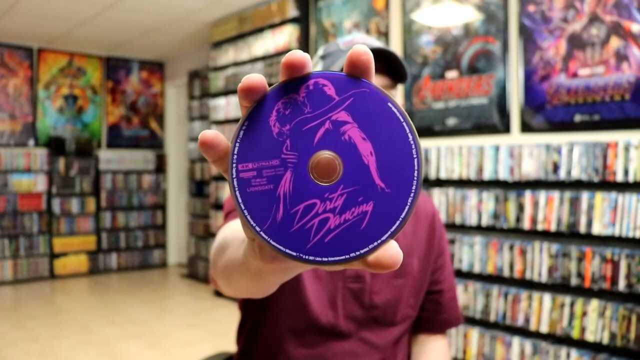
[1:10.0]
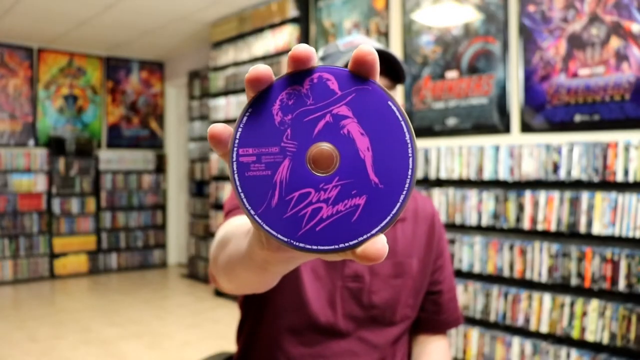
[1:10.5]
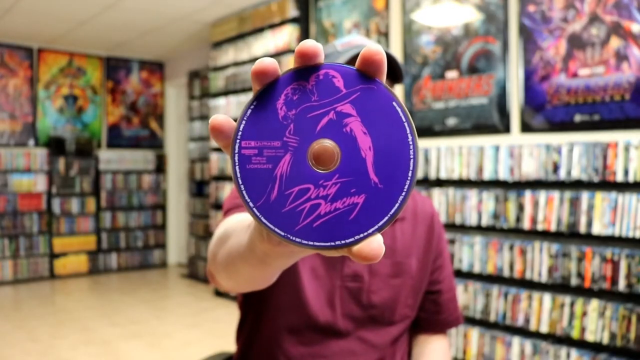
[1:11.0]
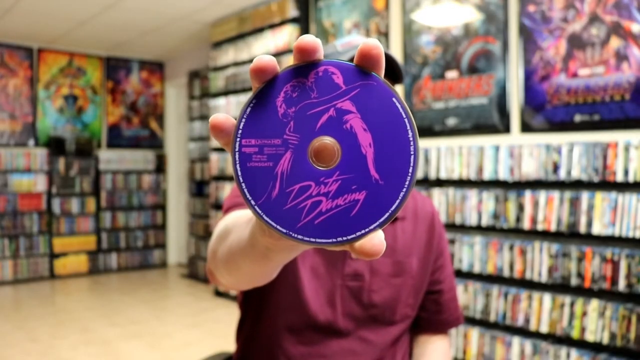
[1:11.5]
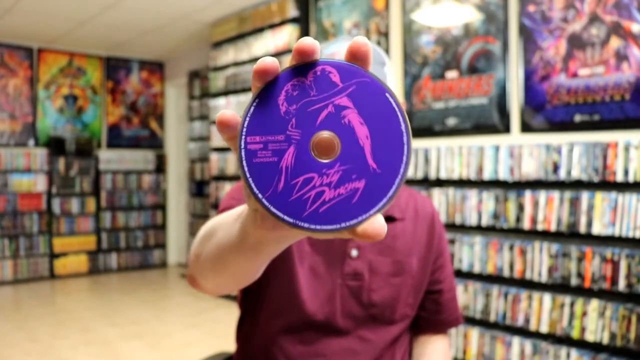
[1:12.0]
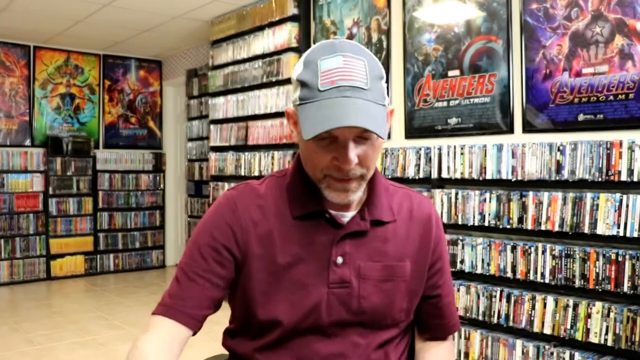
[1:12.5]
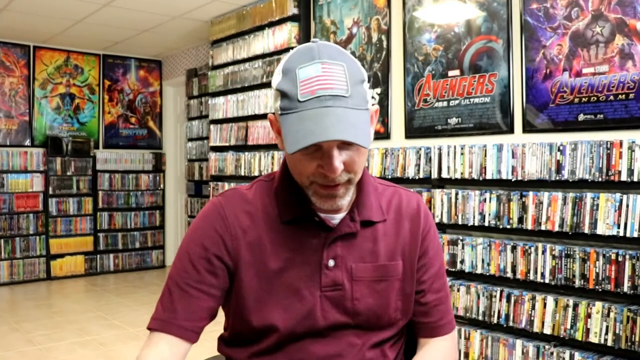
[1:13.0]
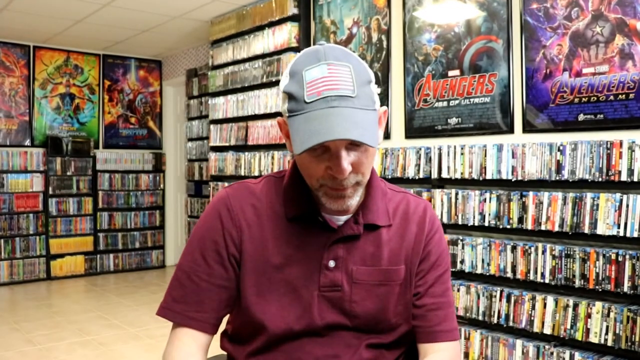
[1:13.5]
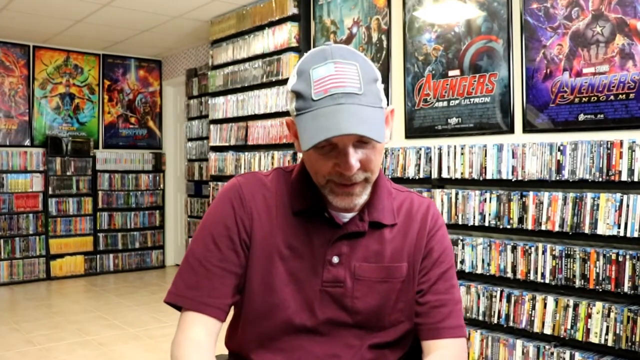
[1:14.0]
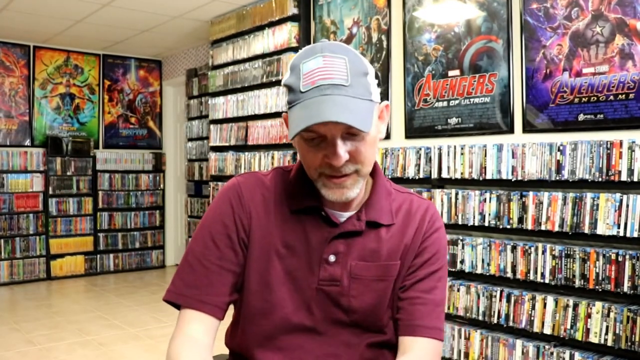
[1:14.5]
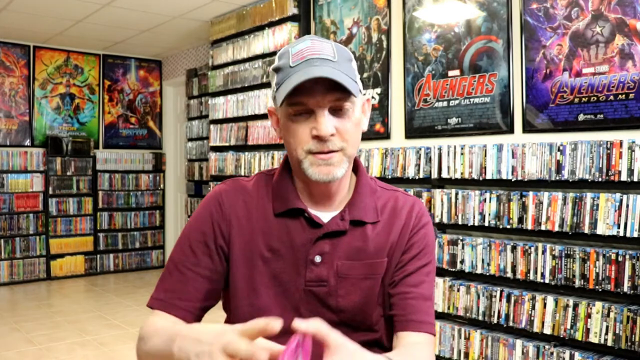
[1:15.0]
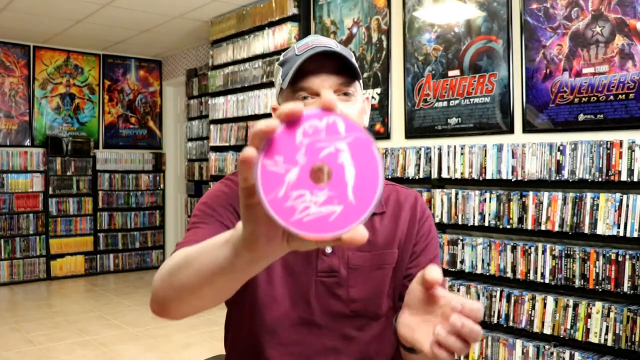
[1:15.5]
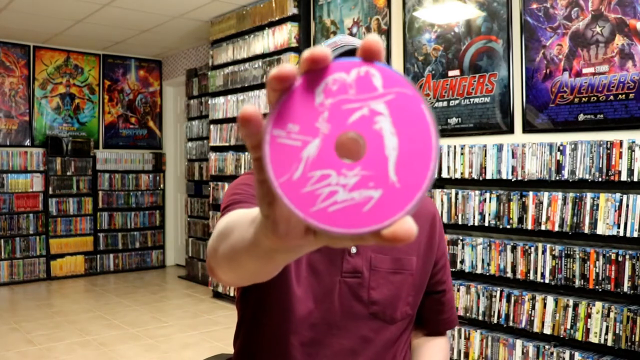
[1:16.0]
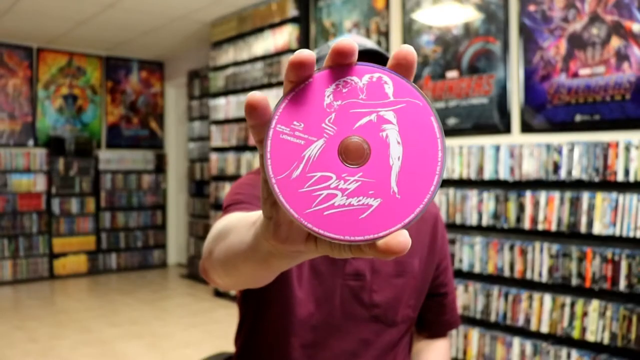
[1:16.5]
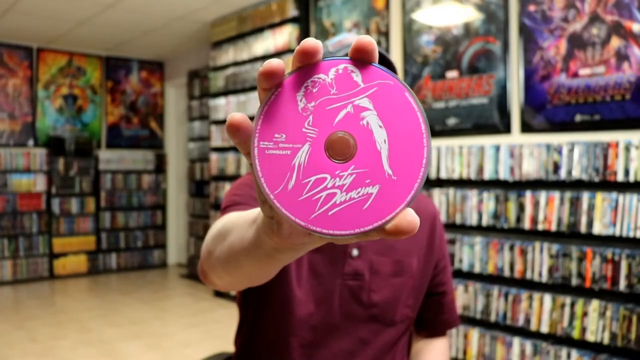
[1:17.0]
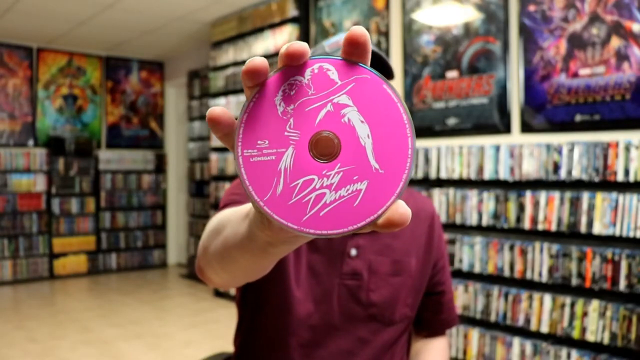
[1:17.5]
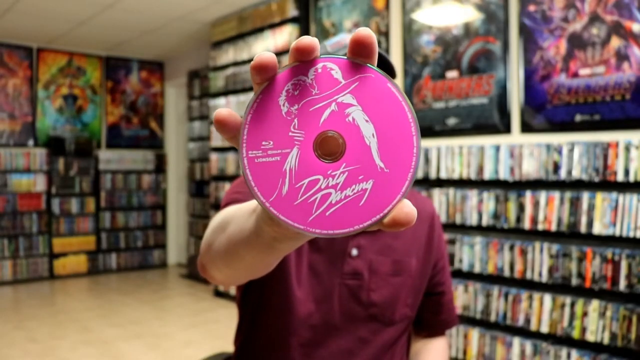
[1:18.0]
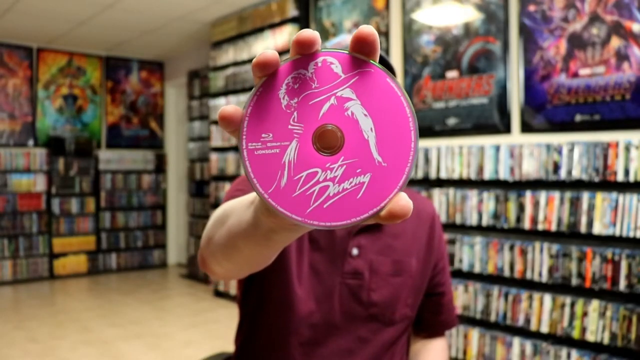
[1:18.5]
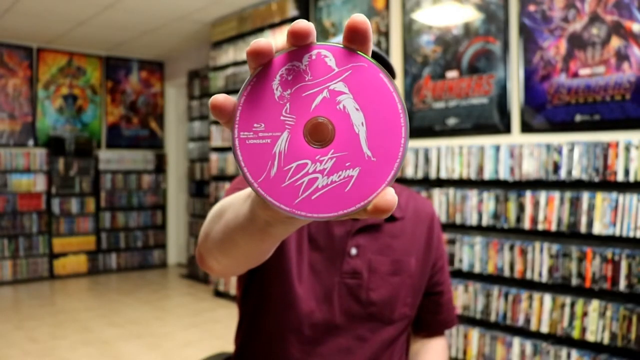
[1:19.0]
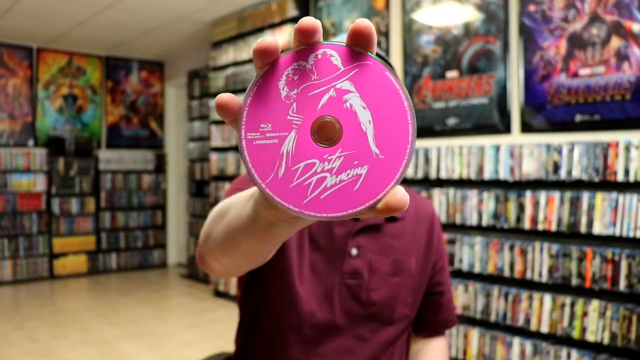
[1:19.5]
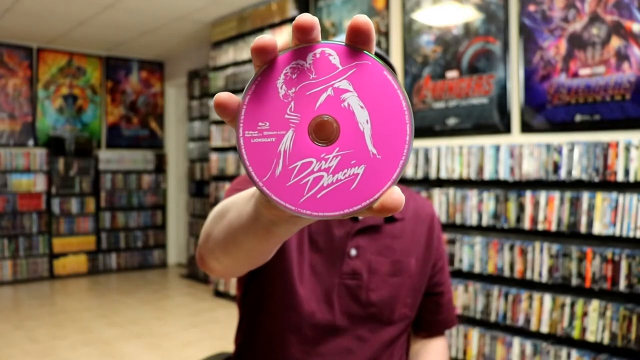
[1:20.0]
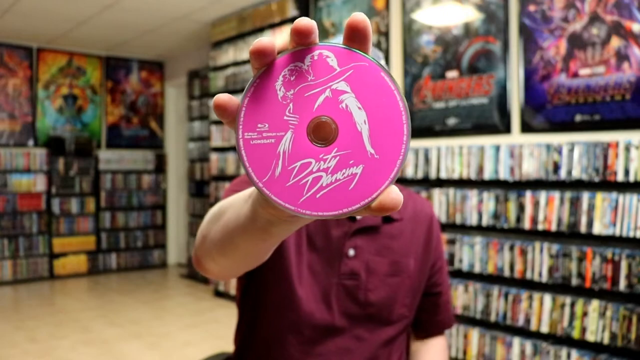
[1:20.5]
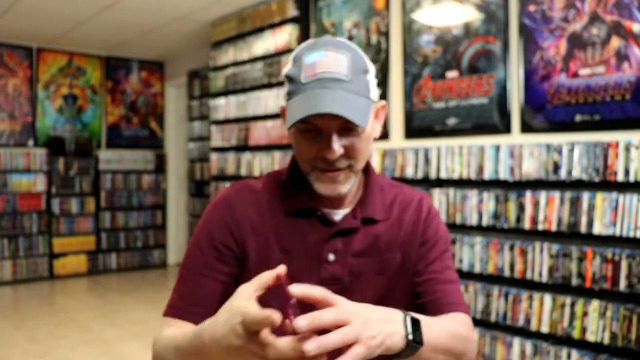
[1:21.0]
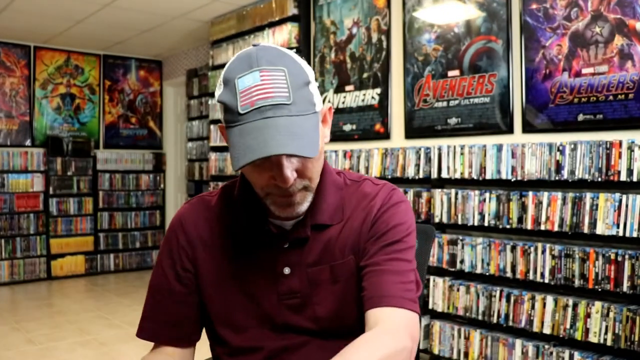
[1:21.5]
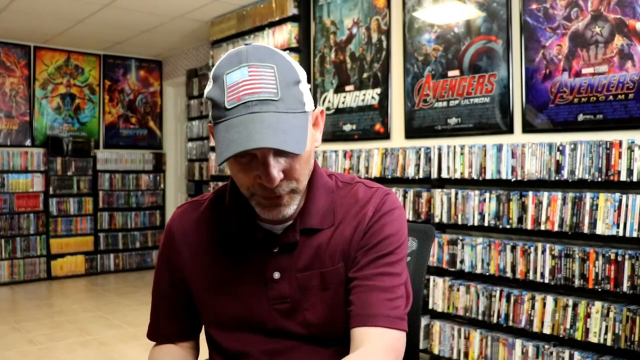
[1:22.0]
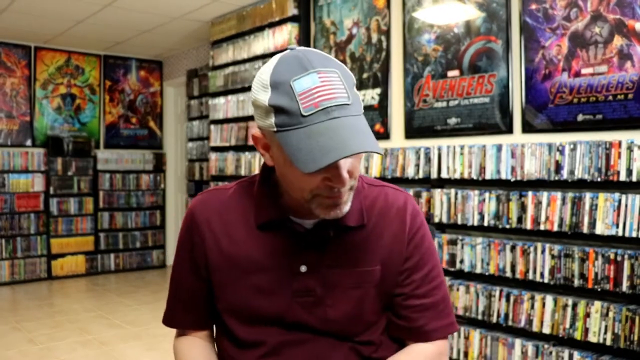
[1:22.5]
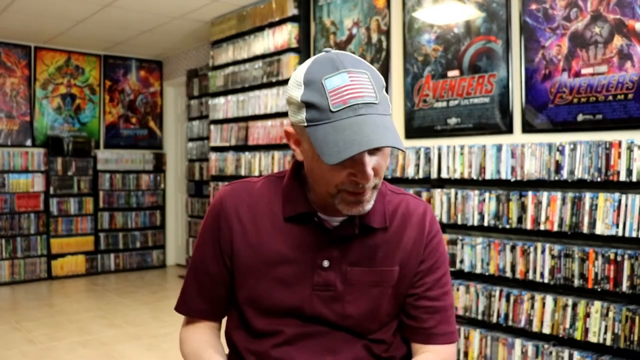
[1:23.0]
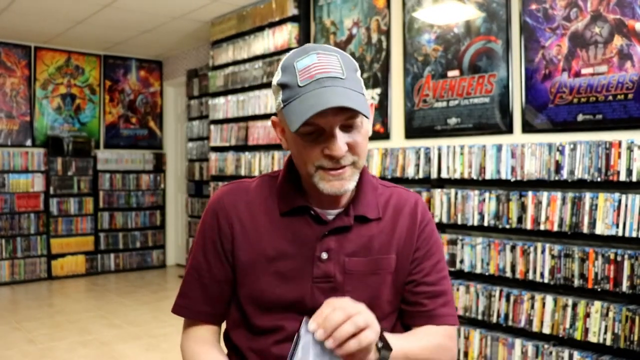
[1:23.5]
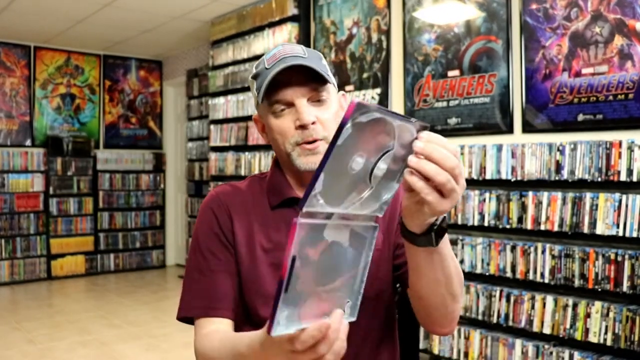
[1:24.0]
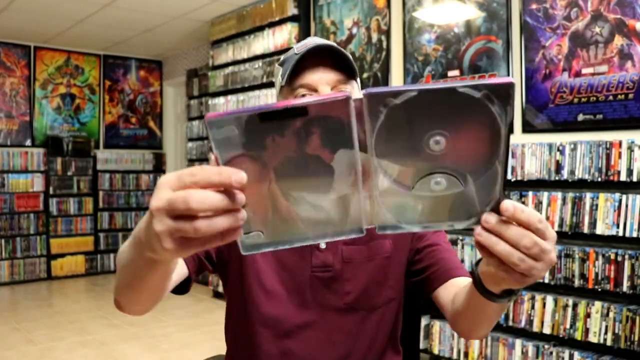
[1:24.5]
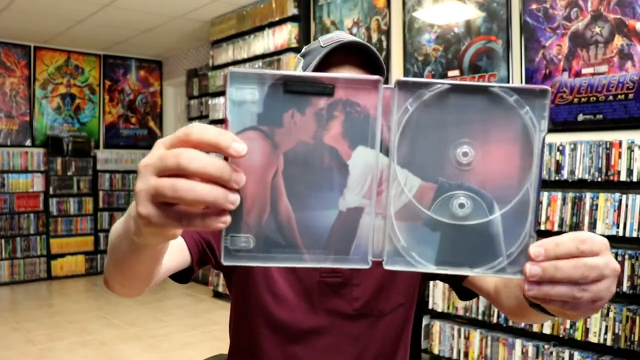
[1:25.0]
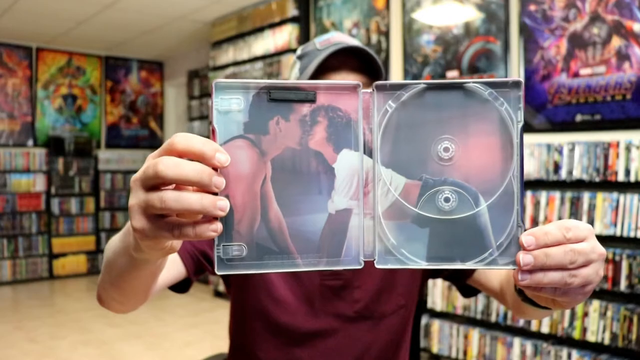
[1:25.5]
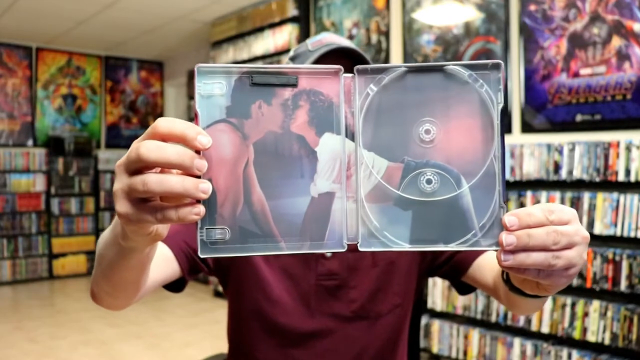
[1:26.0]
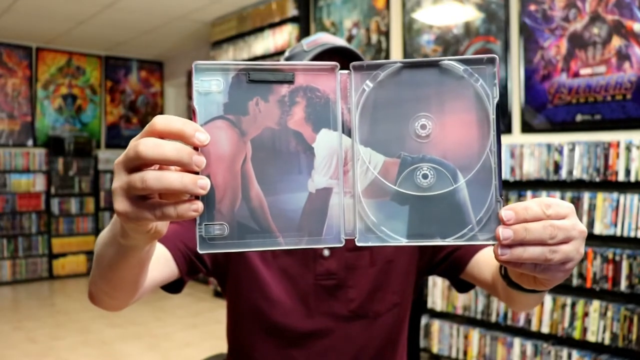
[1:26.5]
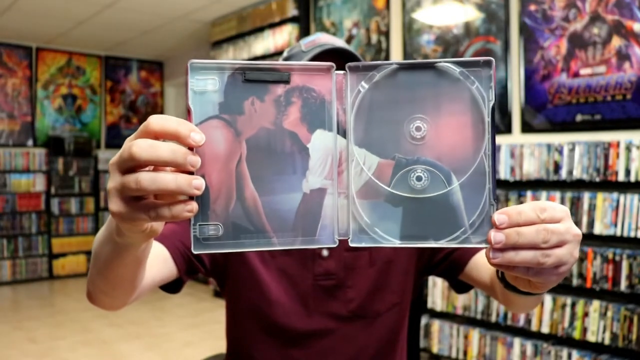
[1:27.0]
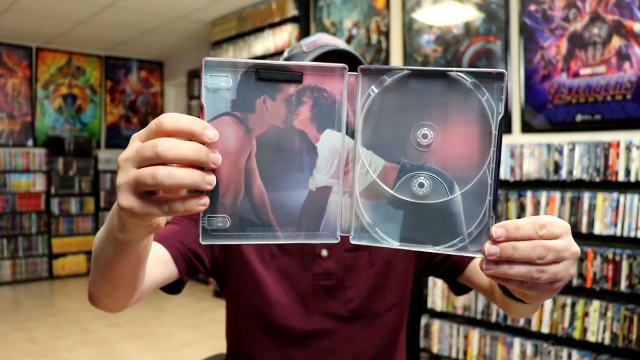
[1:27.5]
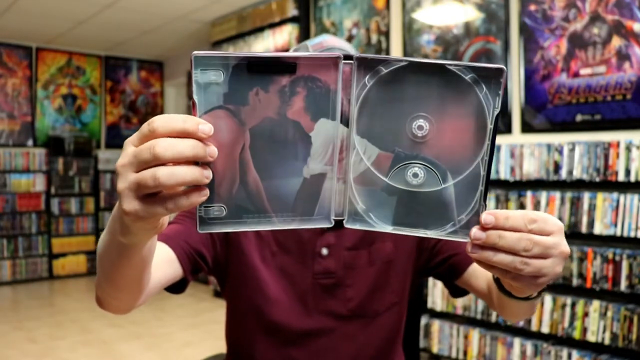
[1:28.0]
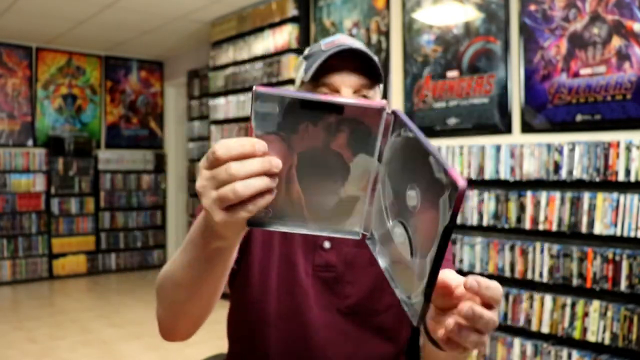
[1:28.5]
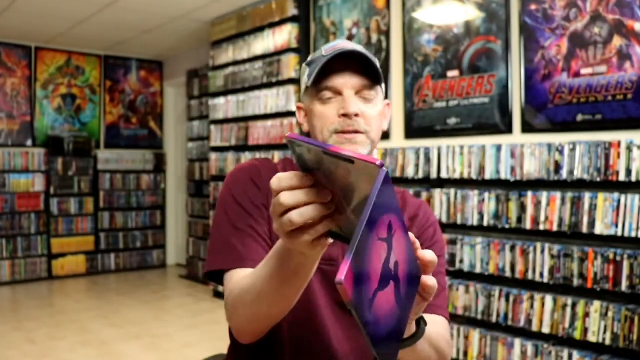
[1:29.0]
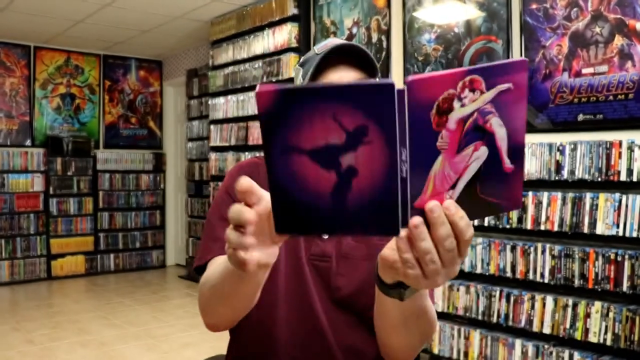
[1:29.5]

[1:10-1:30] The man continues holding the disc up to the camera, where the title "Dirty Dancing" appears in the same color as the figures. He puts the disc down and holds up another, pink disc with the same figures, this time shaded in white instead of a purple haze. He then opens the case for the movie, which has slots for two discs and a screenshot from the movie of what appears to be the two characters going in for a kiss. He holds the case open in frame, then turns it around so the camera gets a view of the front.